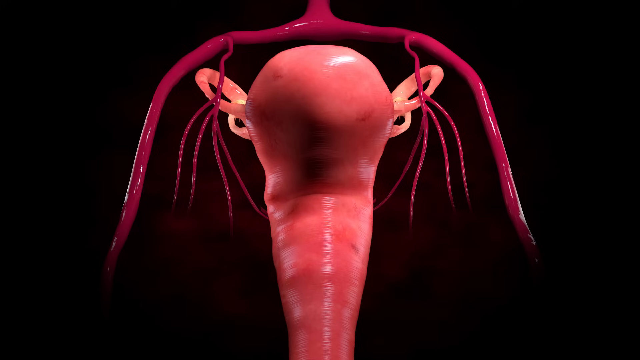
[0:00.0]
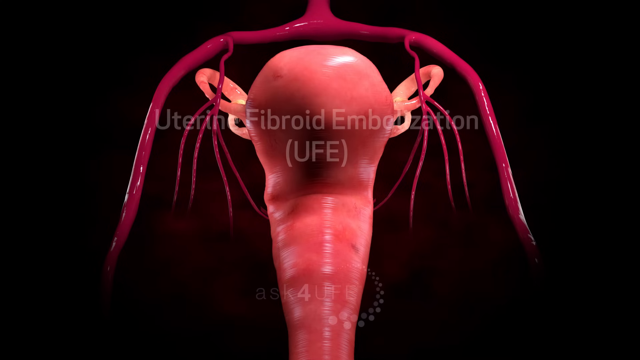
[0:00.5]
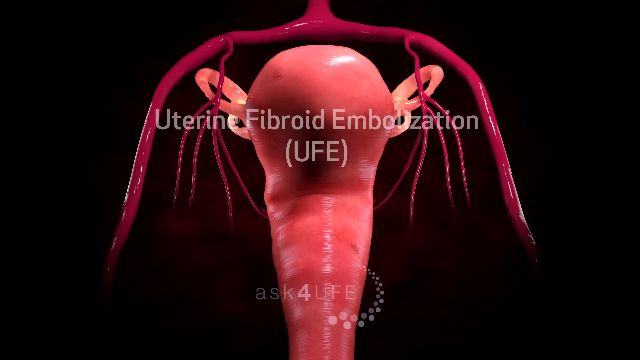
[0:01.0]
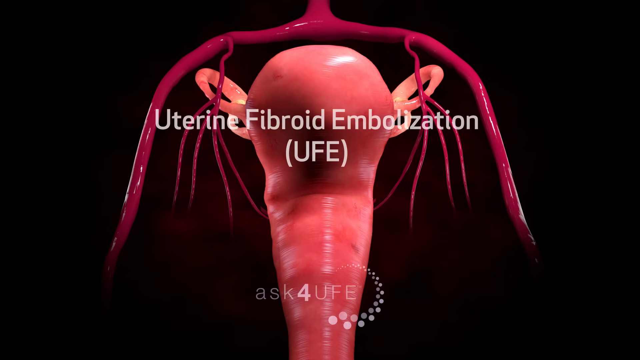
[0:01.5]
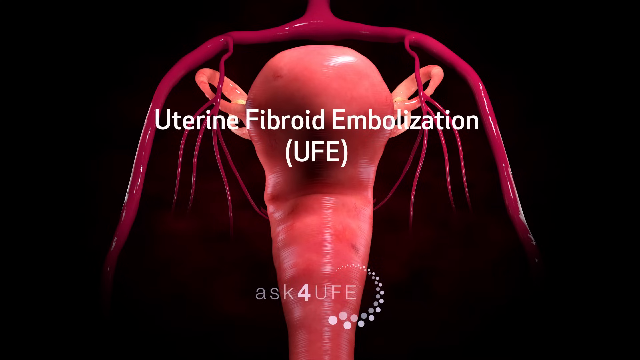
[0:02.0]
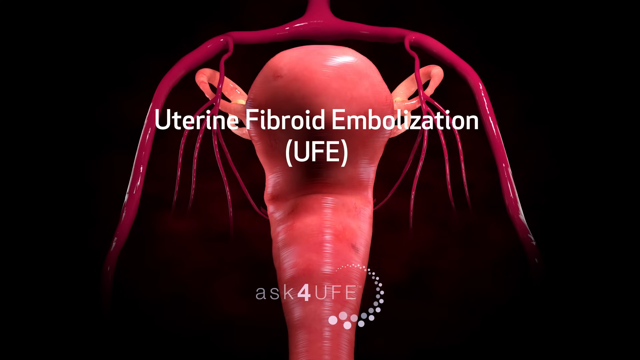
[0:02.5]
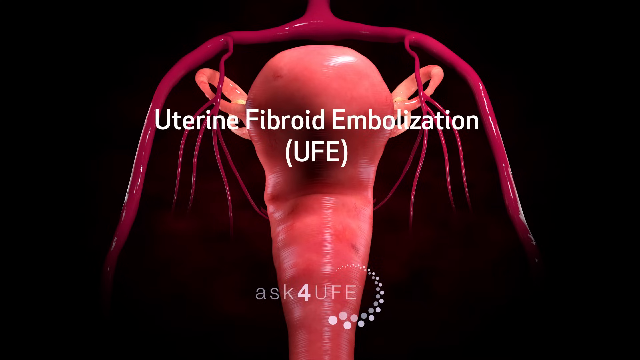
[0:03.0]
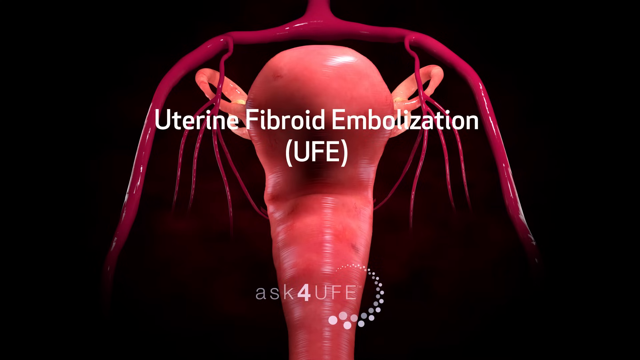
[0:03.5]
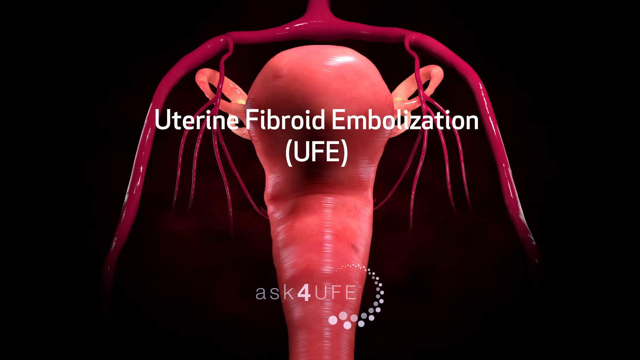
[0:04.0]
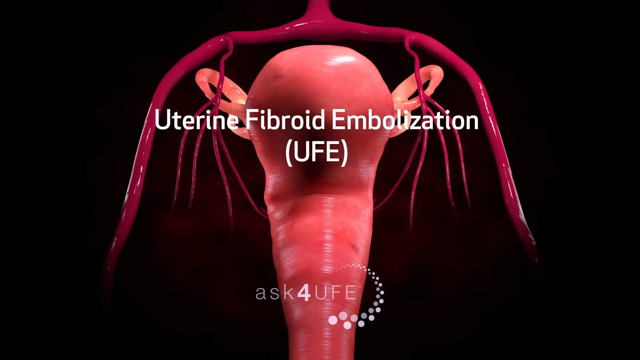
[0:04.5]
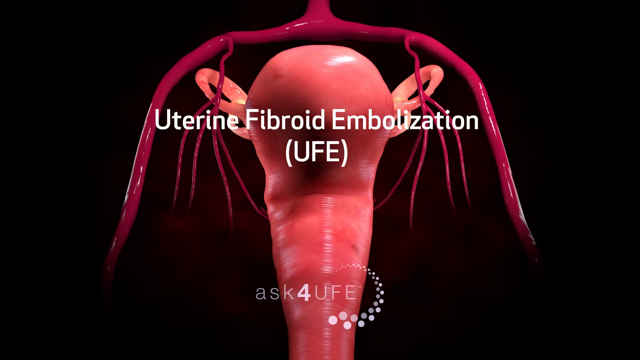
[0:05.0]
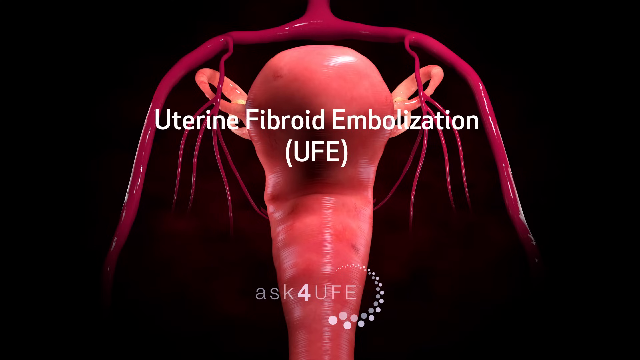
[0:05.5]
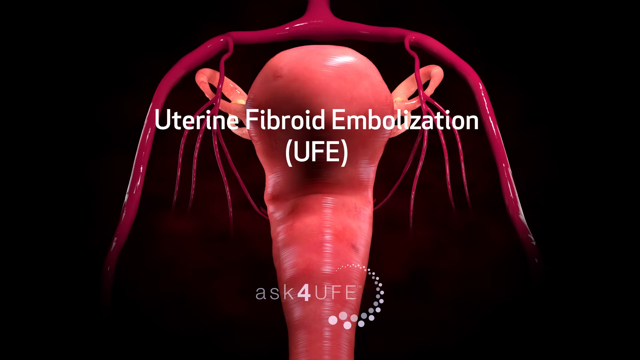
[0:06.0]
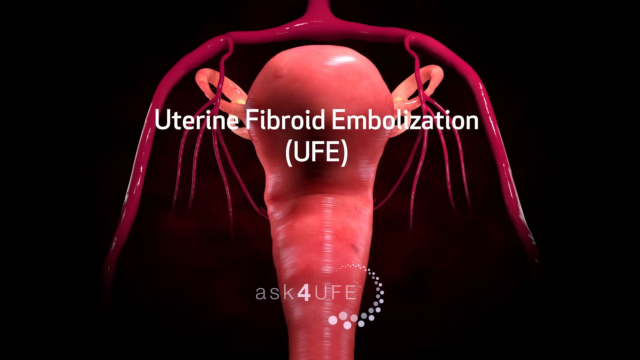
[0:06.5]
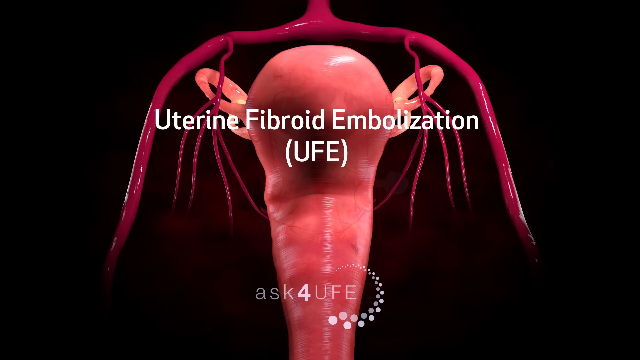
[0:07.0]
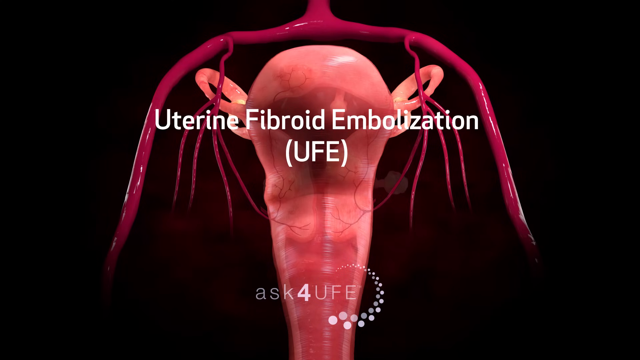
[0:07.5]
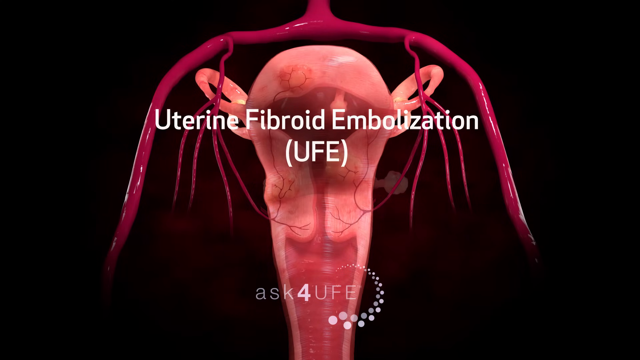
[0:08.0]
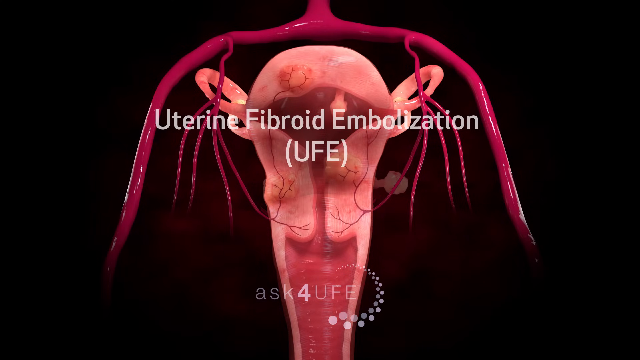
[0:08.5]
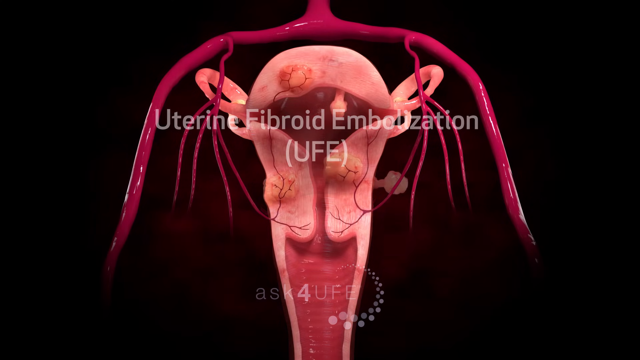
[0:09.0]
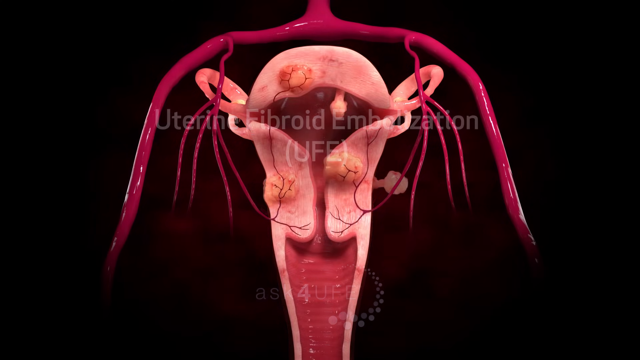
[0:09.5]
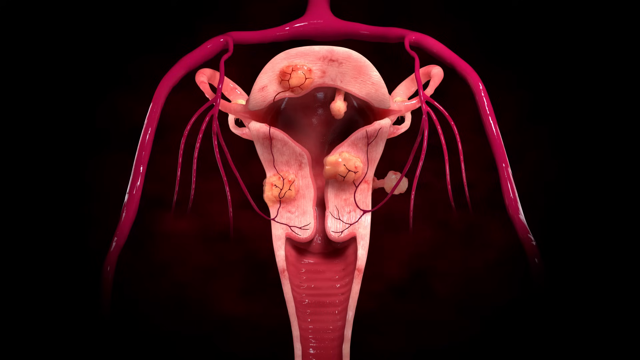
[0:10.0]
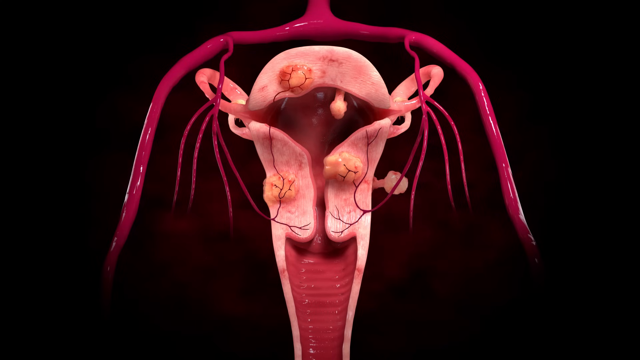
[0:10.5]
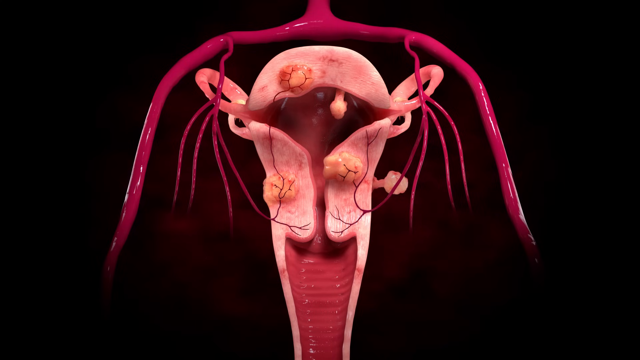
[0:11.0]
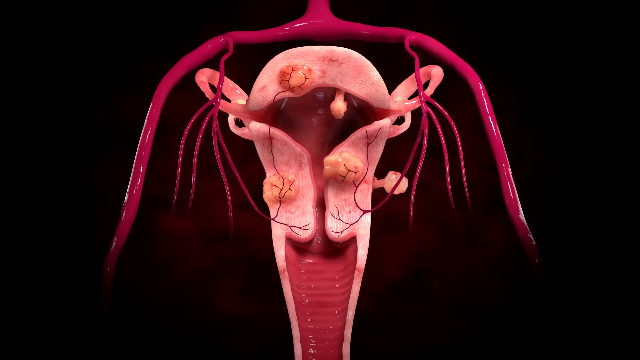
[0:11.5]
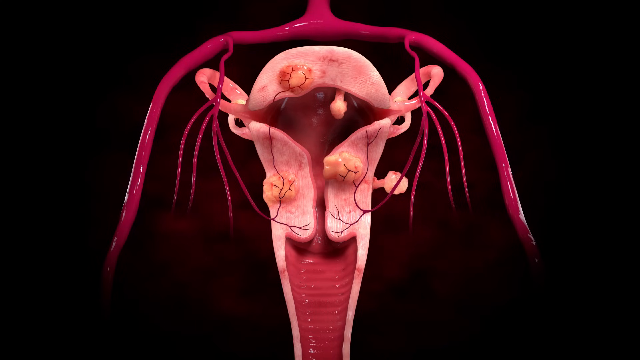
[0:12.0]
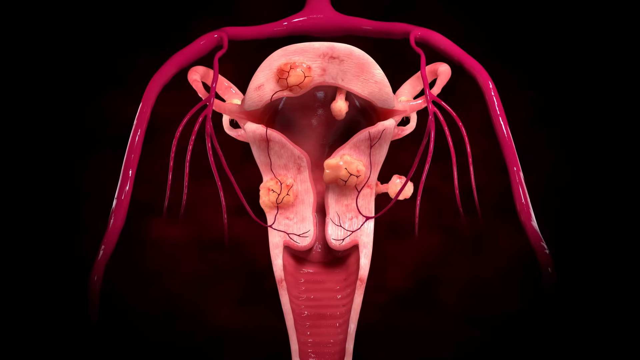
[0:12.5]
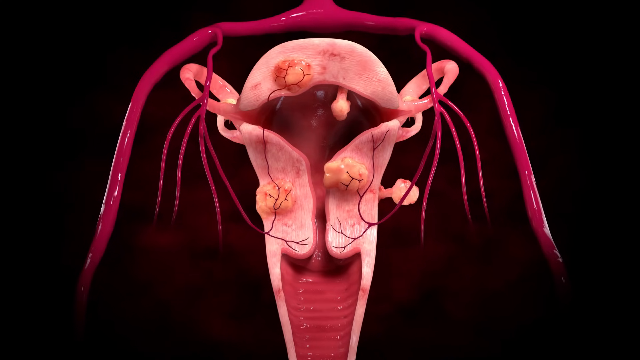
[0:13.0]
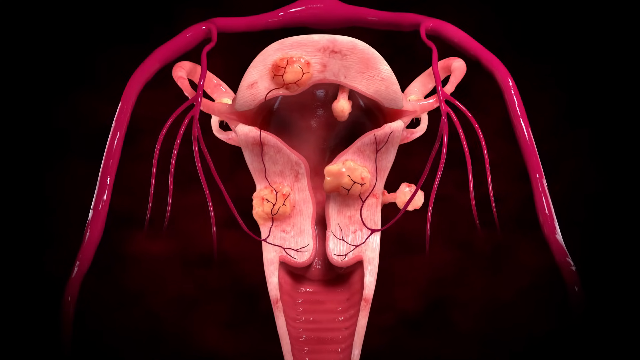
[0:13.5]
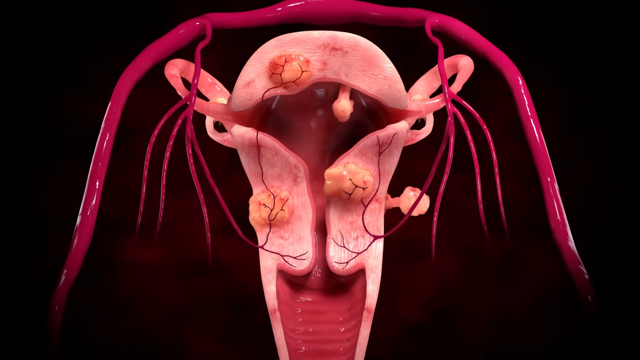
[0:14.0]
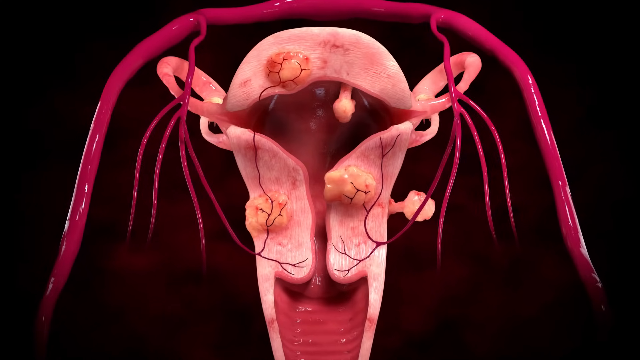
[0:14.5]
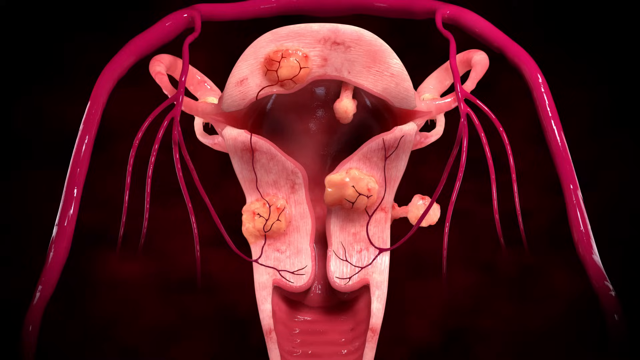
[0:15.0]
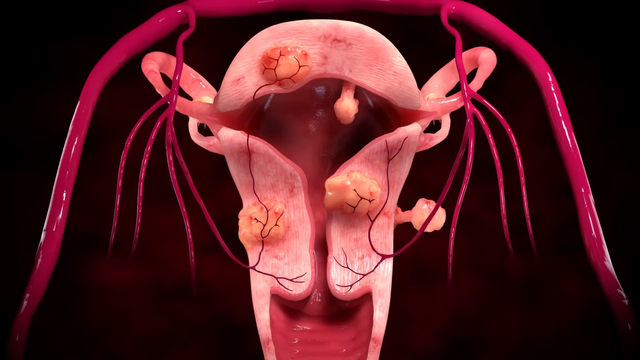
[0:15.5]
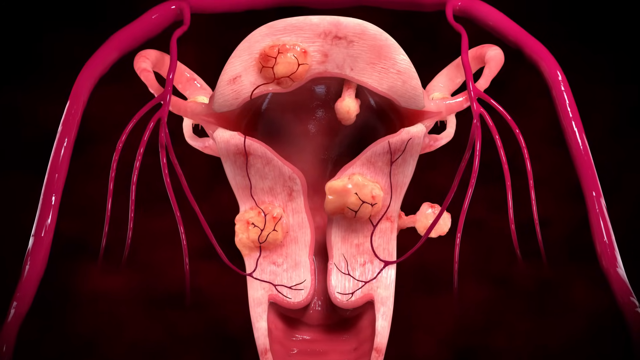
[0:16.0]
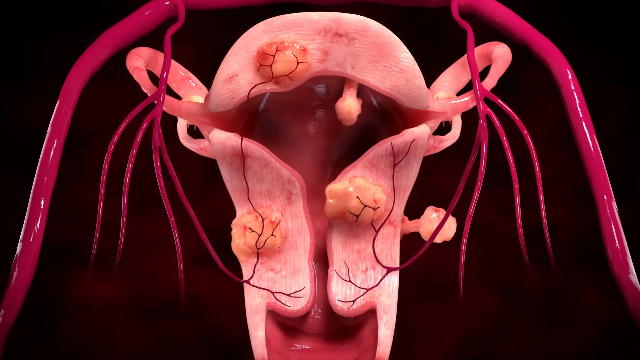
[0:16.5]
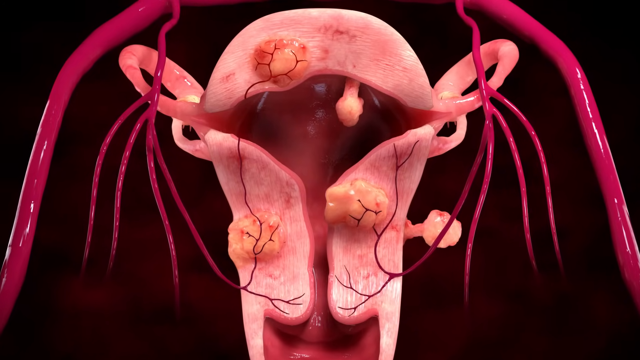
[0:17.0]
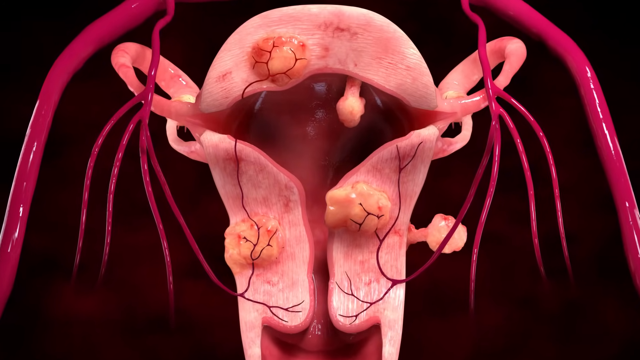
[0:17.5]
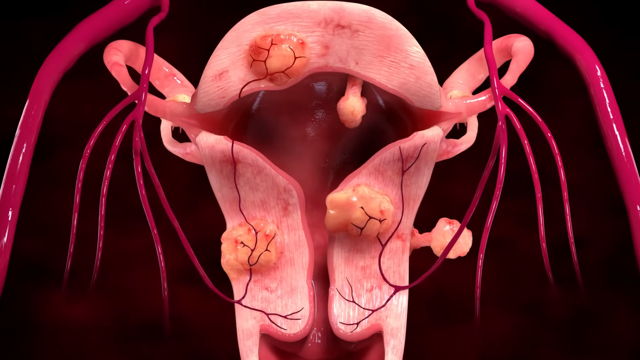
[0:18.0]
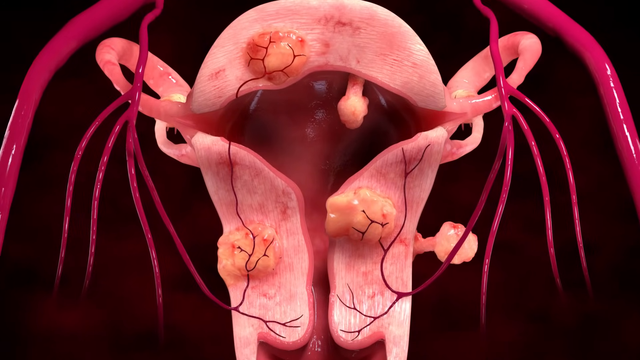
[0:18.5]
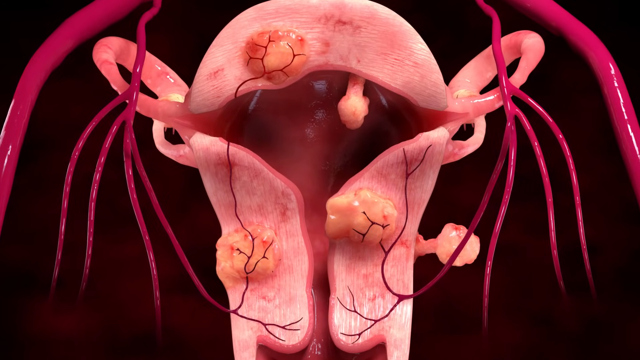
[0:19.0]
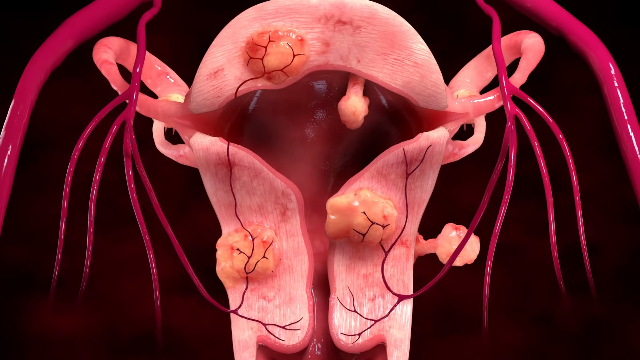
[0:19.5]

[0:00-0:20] The video concerns uterine fibroid embolization, called UFE. Against a black background, either a slide or video, there is a superimposed CGI-type picture of a uterus, and the fallopian tubes are also visible. A kind of cutaway of the uterus then shows fibroids growing in the lining of the uterus; some have popped through both inside and outside the uterus. They look kind of like little flesh-colored Brussels sprouts, with little veins coming out of them, apparently a blood supply keeping the fibroids alive. Some are deeply embedded in the uterus itself. The camera takes a sort of close-up into this cross section of the uterus, which is mostly pink and coral colored.